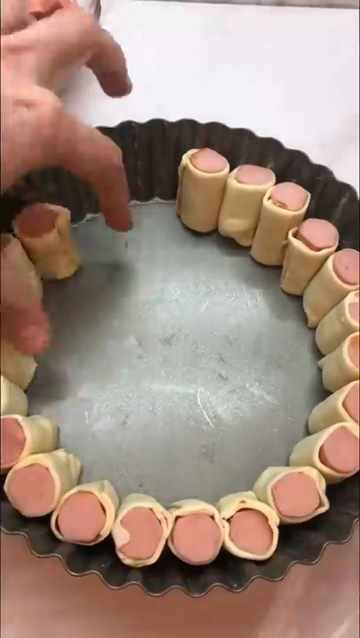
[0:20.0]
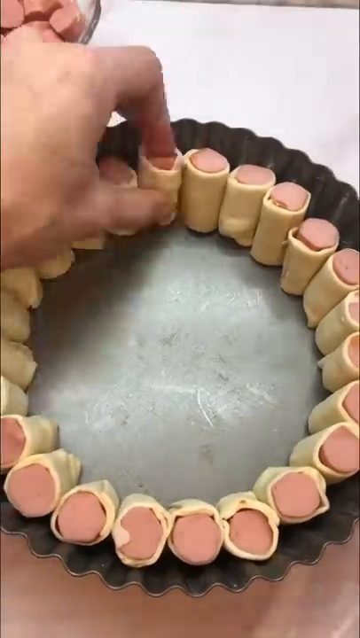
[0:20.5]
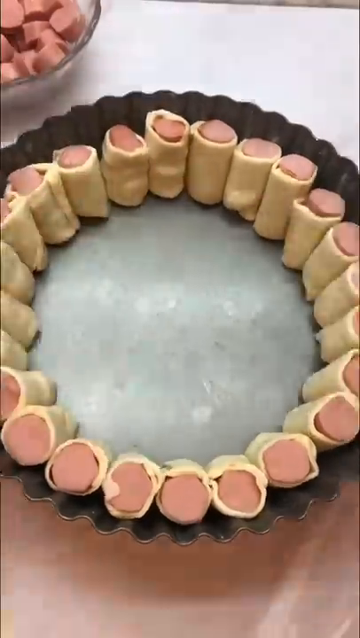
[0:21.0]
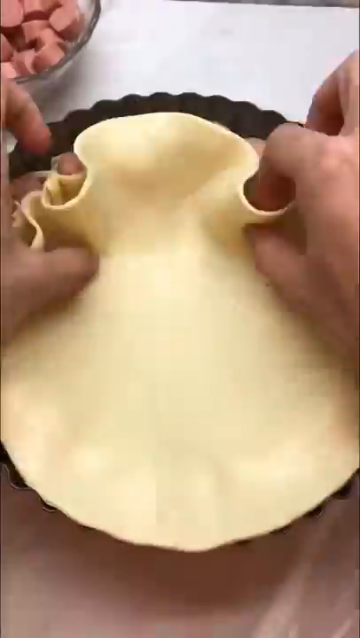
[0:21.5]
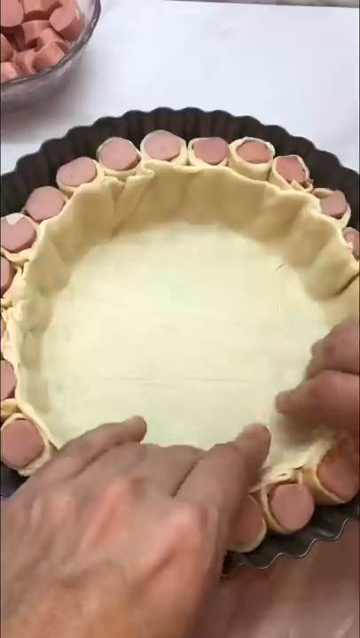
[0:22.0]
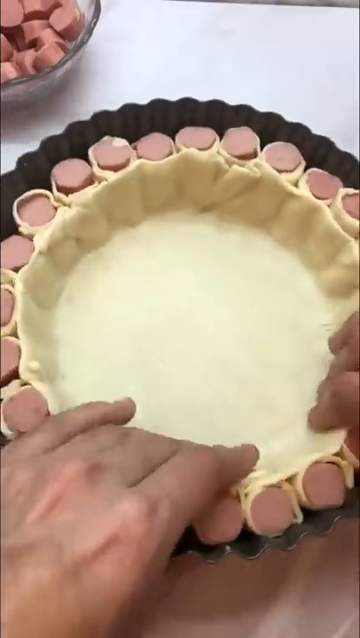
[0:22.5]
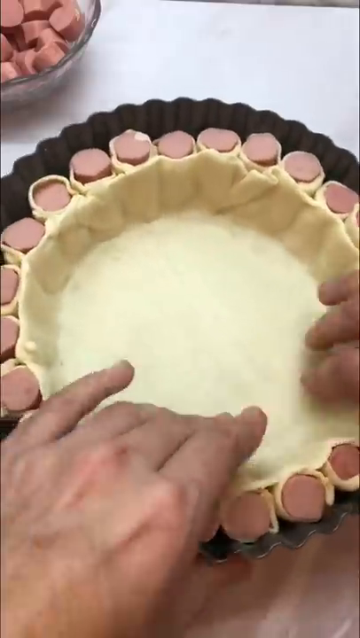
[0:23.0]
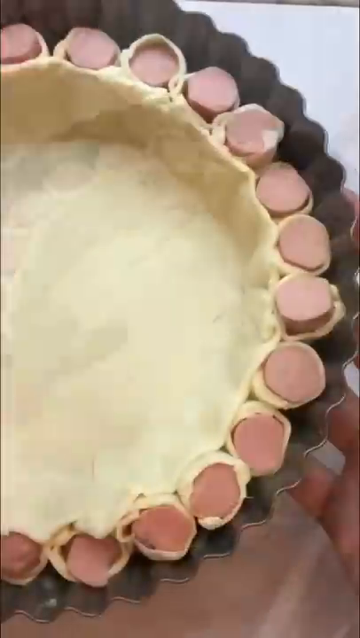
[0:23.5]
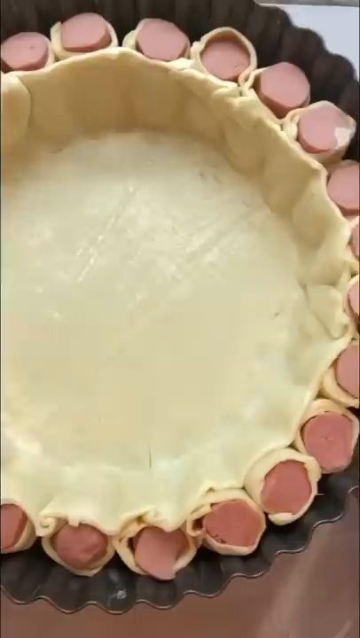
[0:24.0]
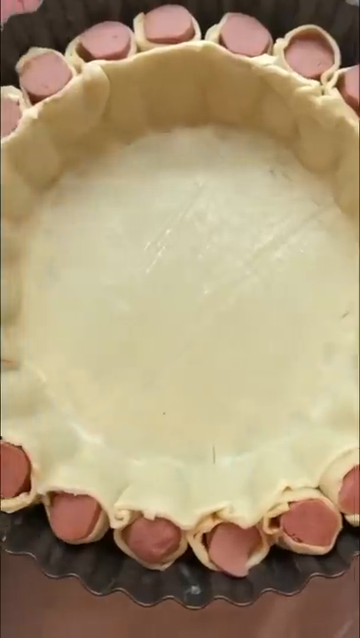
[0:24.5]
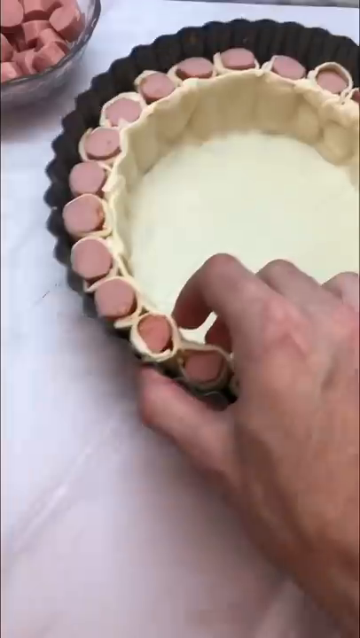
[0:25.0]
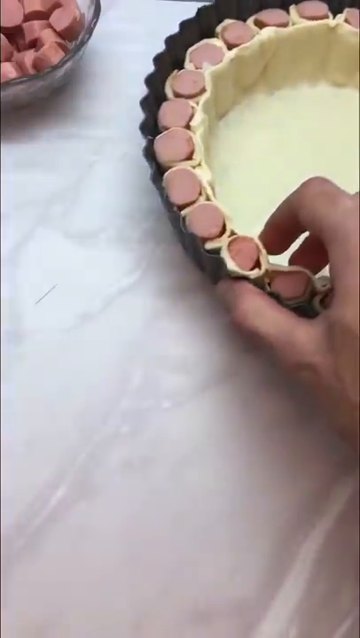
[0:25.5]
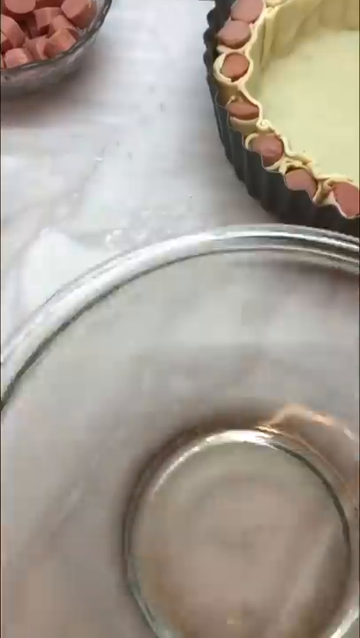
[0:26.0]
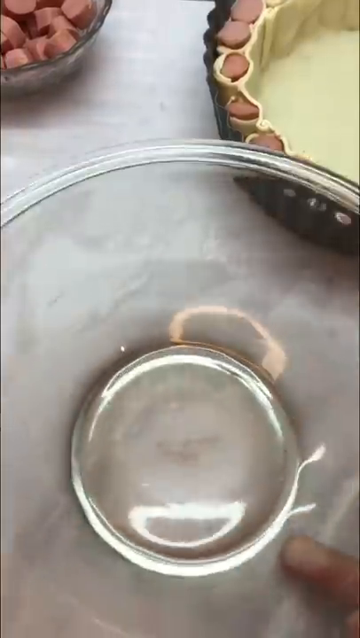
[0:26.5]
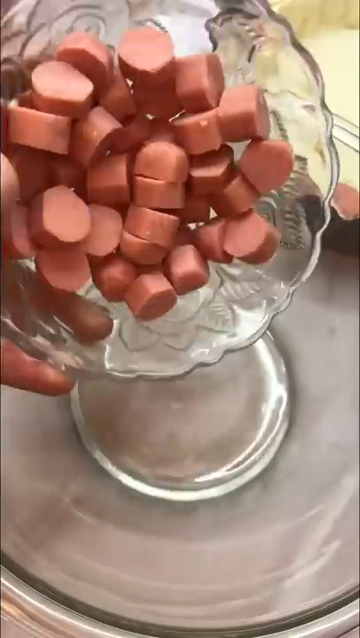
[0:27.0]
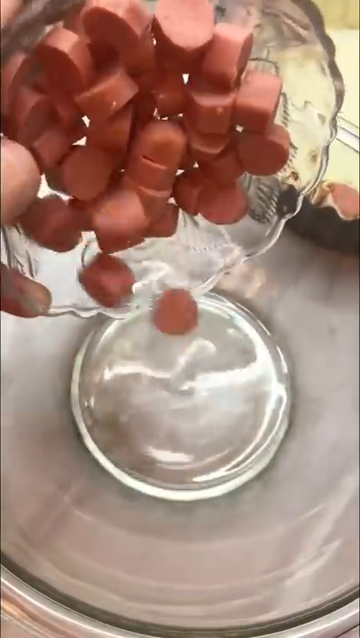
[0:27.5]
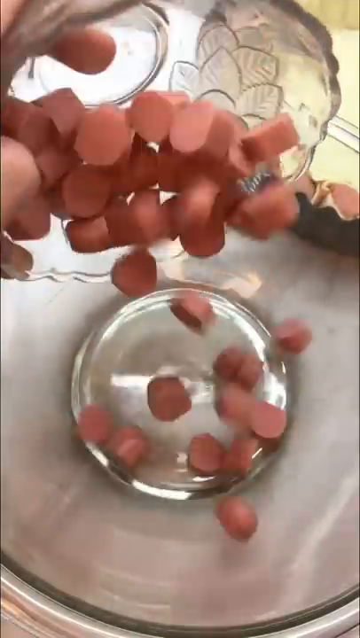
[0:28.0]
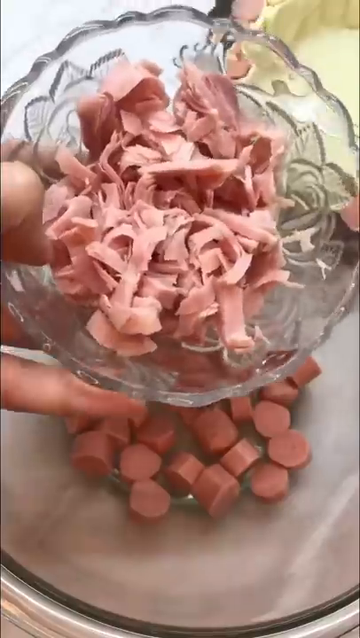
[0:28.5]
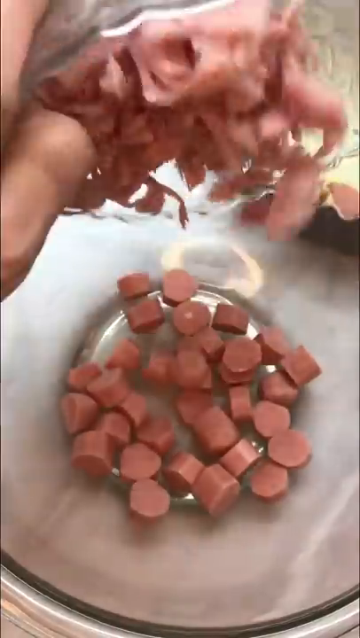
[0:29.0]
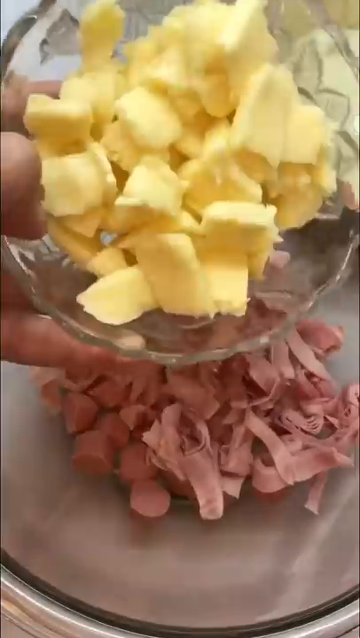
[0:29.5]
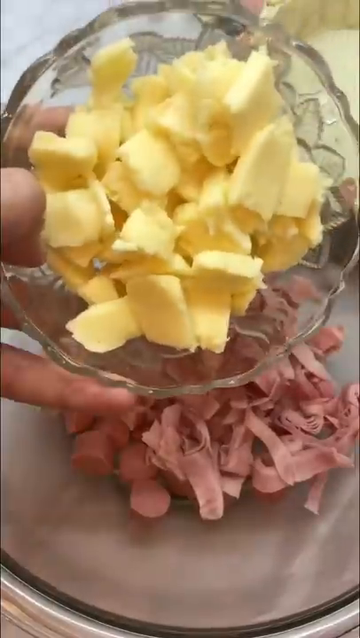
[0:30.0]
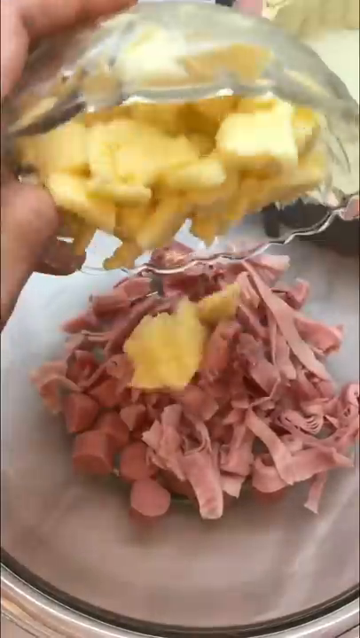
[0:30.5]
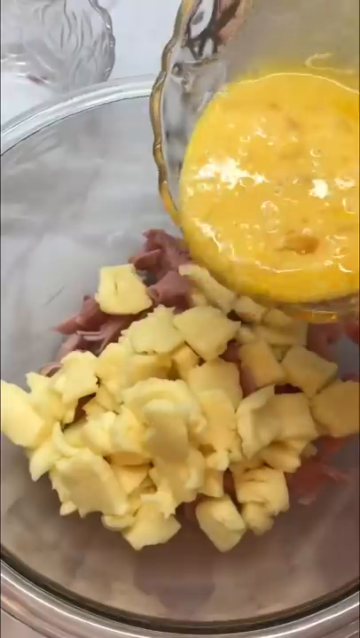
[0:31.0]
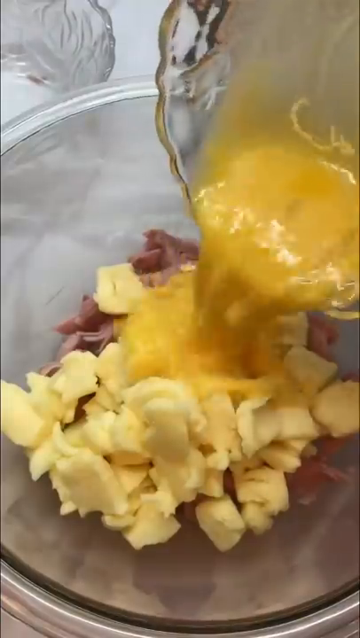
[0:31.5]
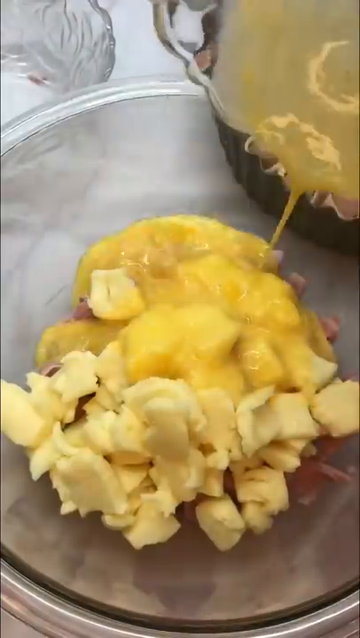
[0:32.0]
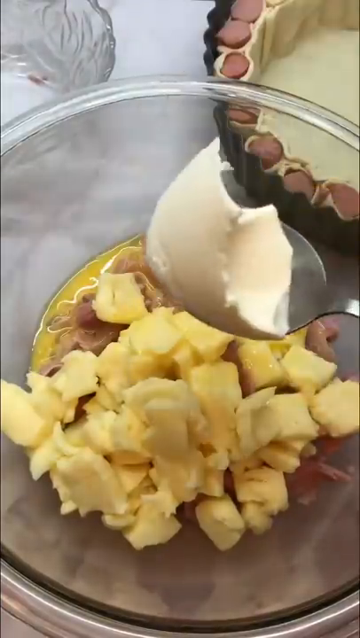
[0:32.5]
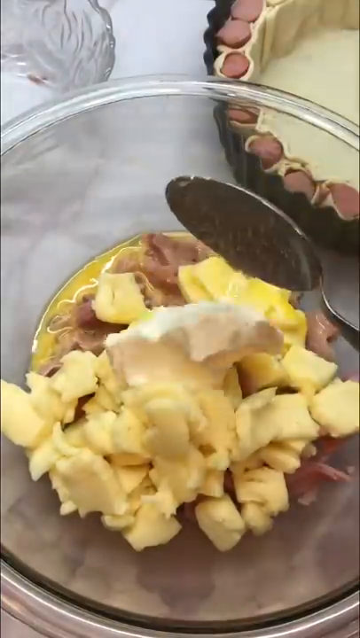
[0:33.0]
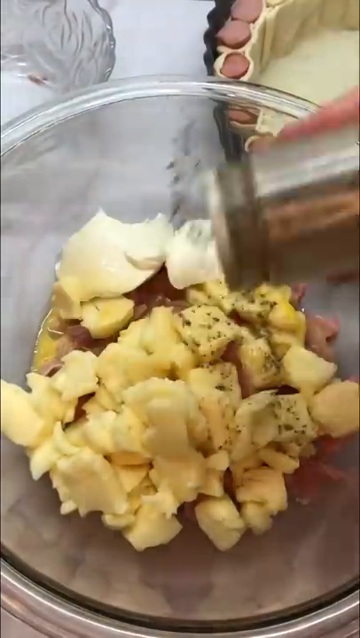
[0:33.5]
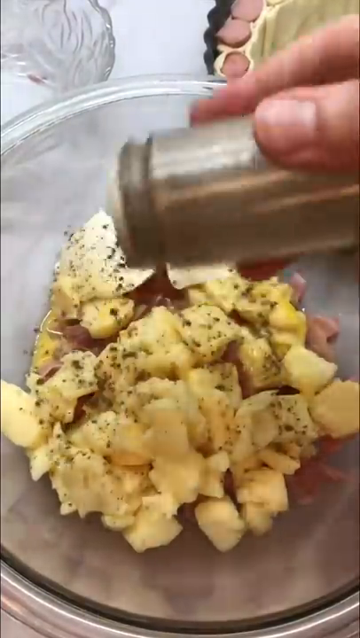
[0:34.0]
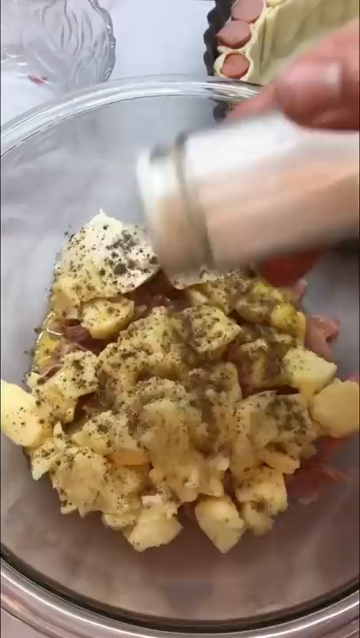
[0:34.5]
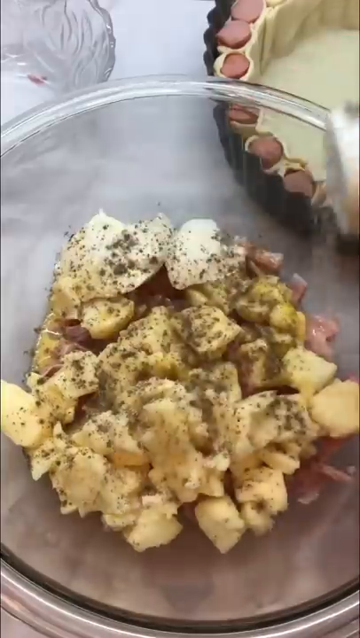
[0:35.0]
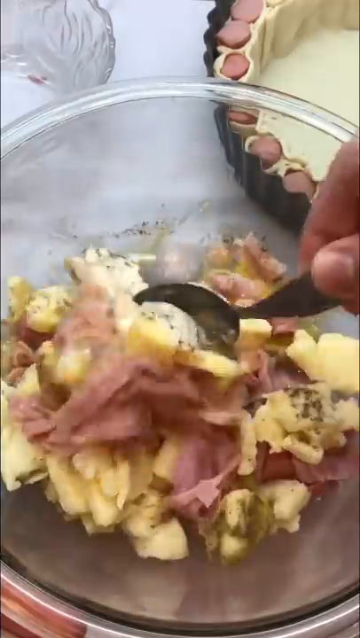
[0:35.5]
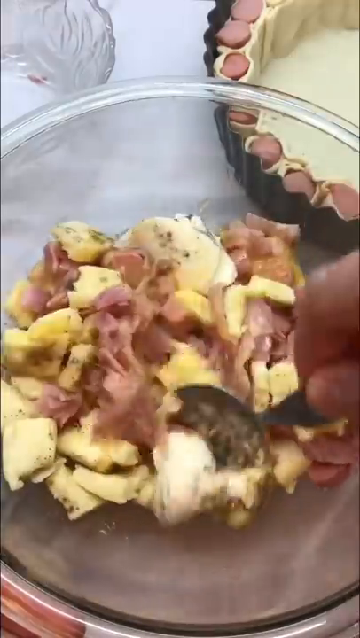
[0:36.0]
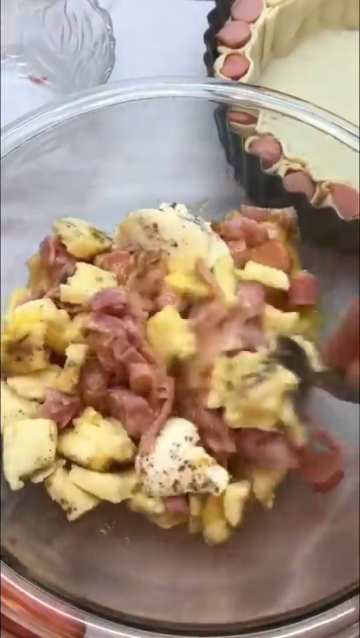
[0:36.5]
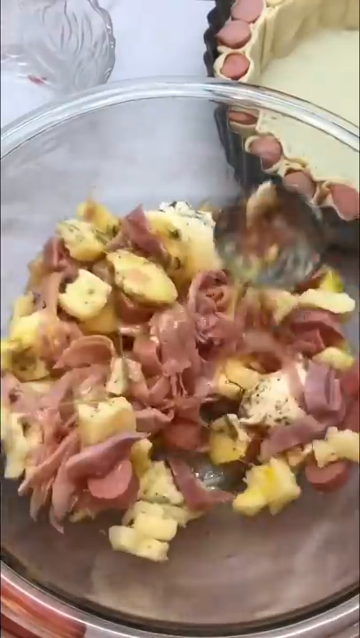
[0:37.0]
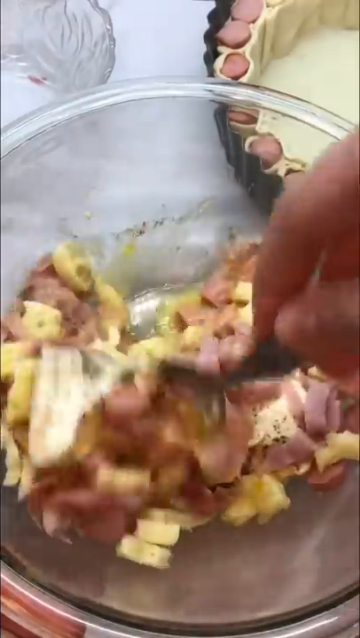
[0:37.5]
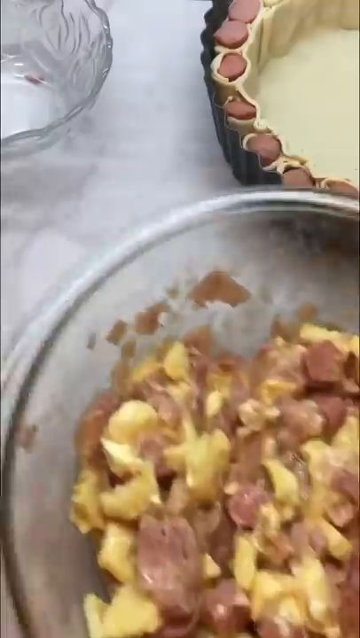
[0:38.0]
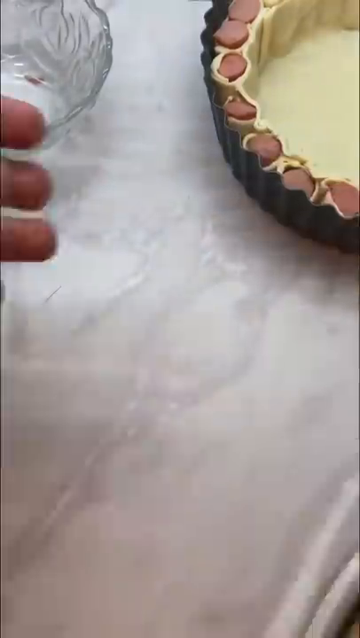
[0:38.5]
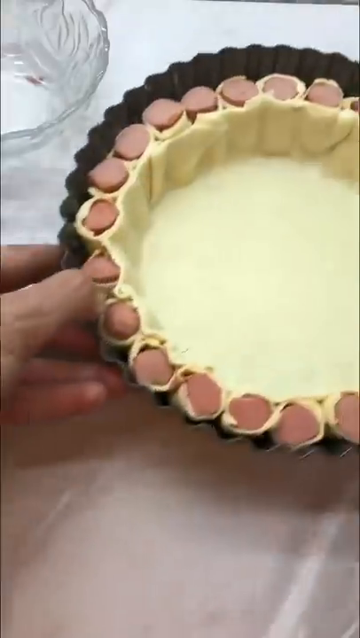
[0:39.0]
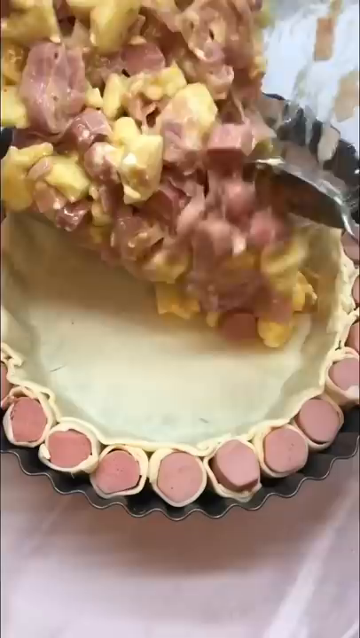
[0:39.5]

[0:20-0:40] The very last dough-wrapped hot dog pieces are put into the pan, and then what looks like a pie crust is put inside that circle. The pair of hands sets this aside to make the inner mixture in a glass bowl. They add more chopped hot dog pieces, then what appears to be another pork product, possibly thin slices of ham or prosciutto. Next comes what looks like chopped butter, then what looks like some kind of egg mixture, then something like cream or butter, and finally a little dark seasoning that might be salt and pepper. Each ingredient is added one by one into the glass bowl, and each comes from its own glass bowl, except the cream, which is on a spoon, and the salt and pepper. The person mixes everything together with a spoon and begins spooning the mixture into the pan, inside the pie crust that is inside the ring of hot dogs.